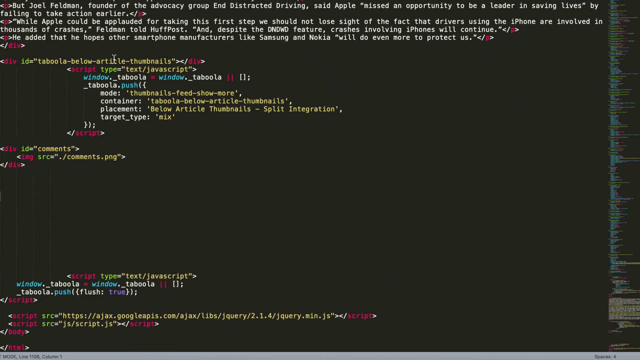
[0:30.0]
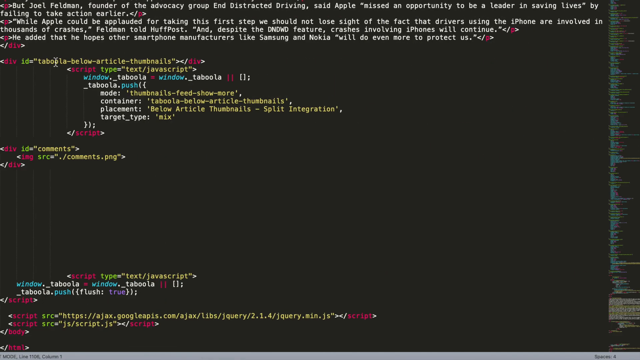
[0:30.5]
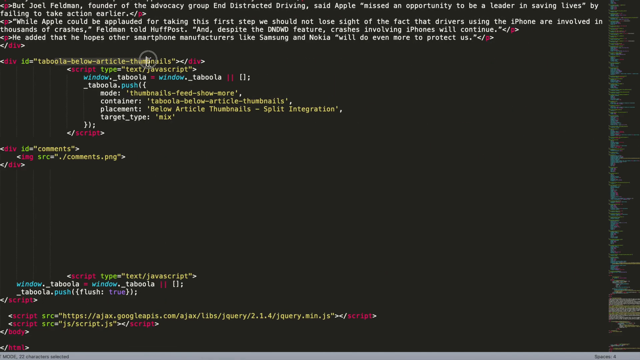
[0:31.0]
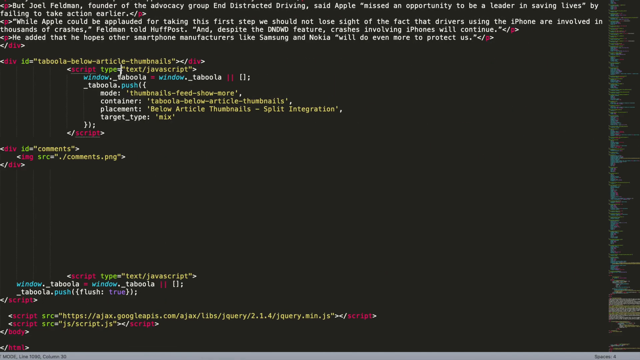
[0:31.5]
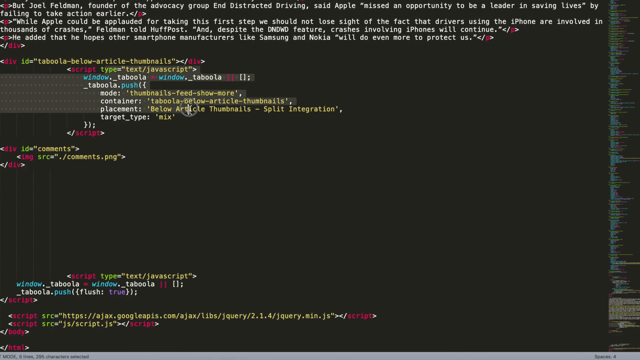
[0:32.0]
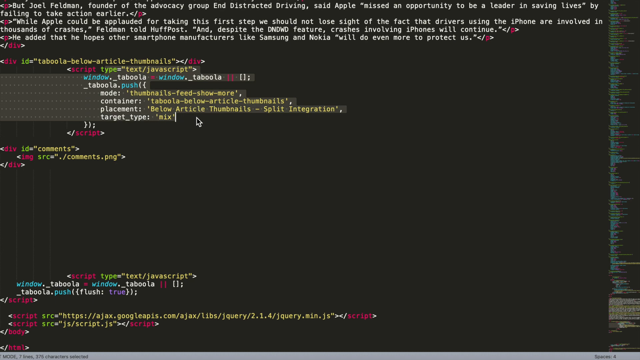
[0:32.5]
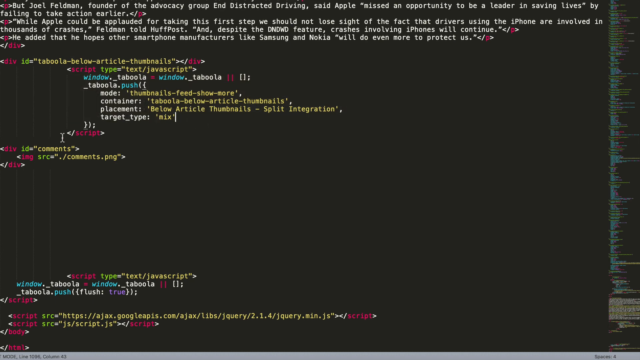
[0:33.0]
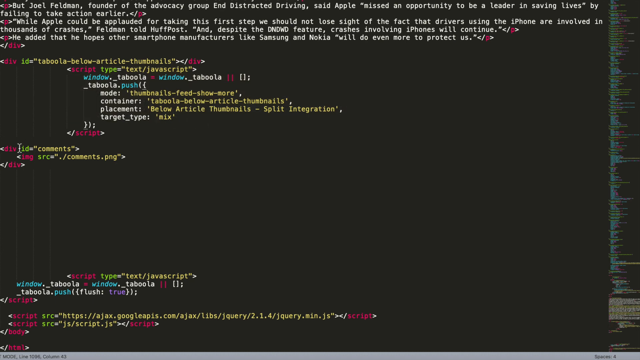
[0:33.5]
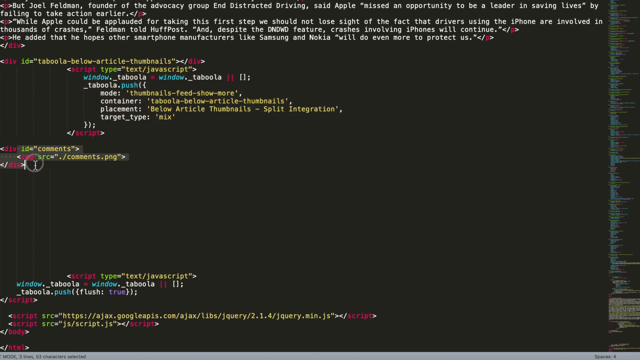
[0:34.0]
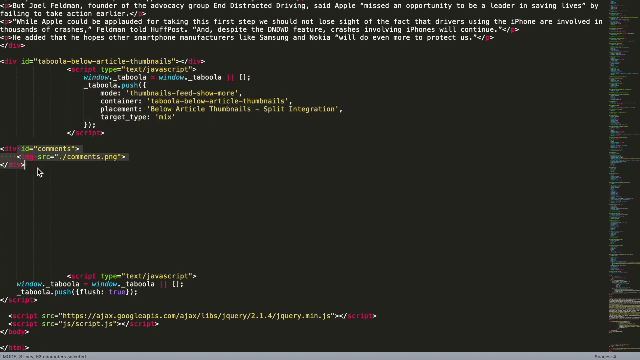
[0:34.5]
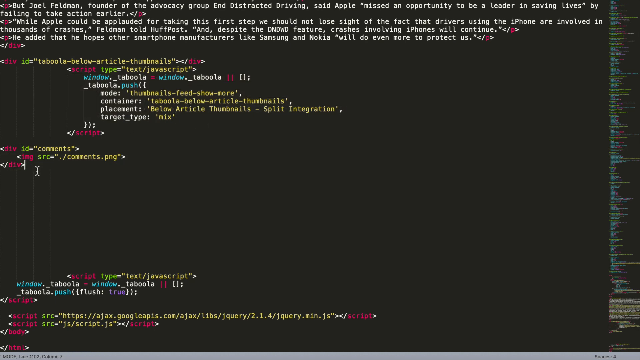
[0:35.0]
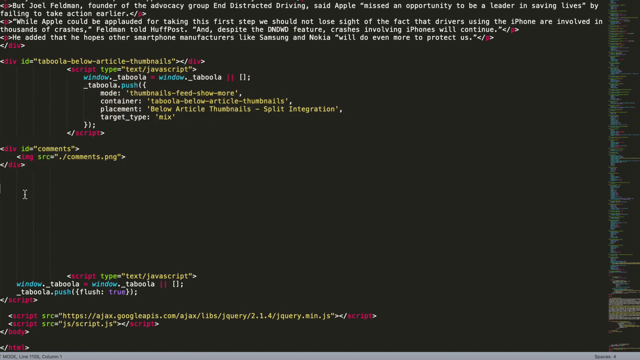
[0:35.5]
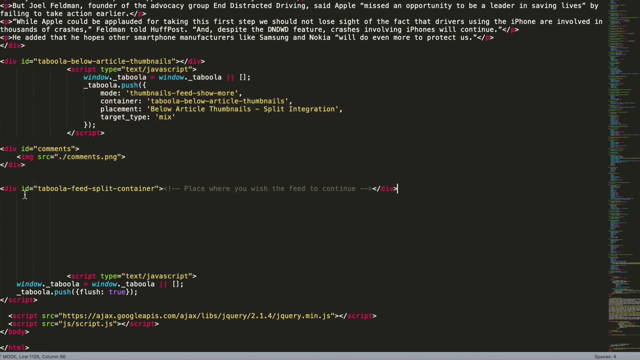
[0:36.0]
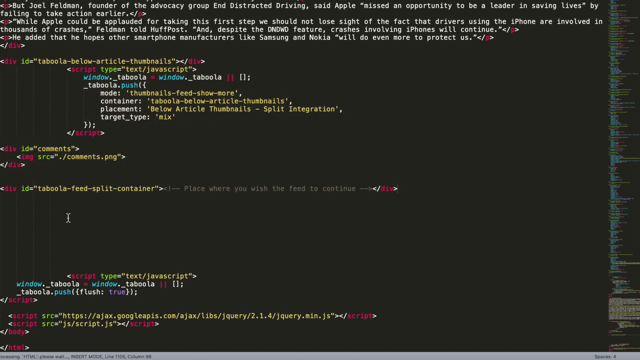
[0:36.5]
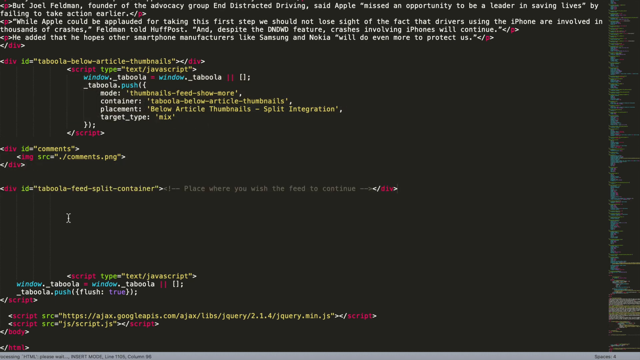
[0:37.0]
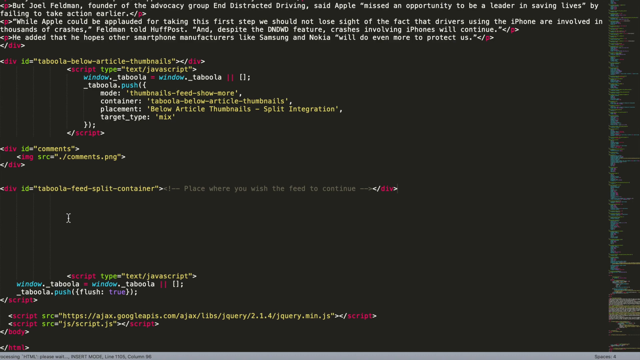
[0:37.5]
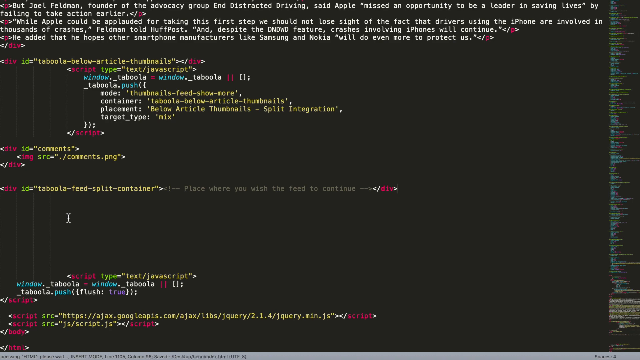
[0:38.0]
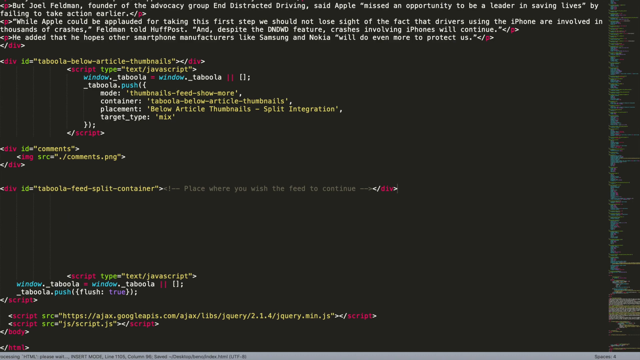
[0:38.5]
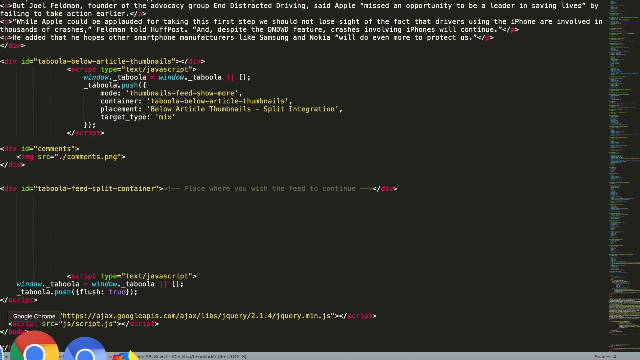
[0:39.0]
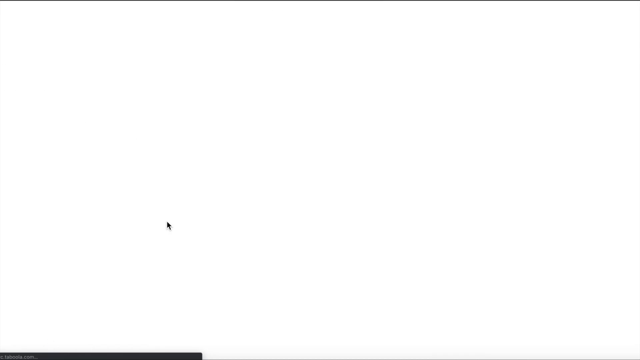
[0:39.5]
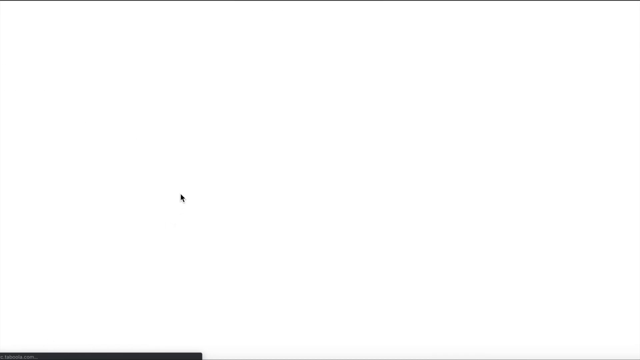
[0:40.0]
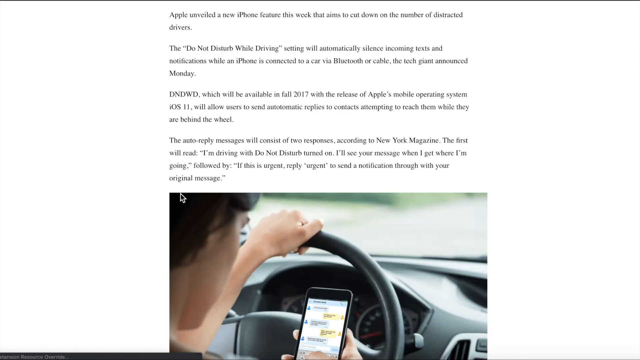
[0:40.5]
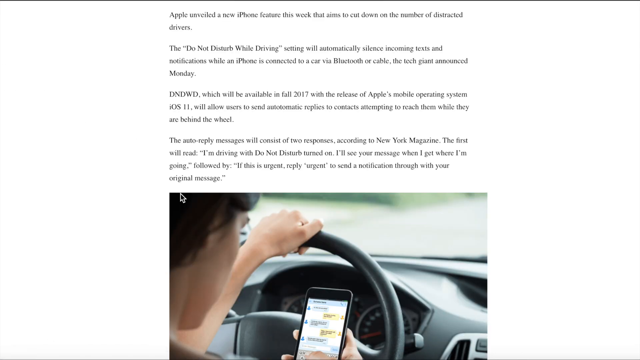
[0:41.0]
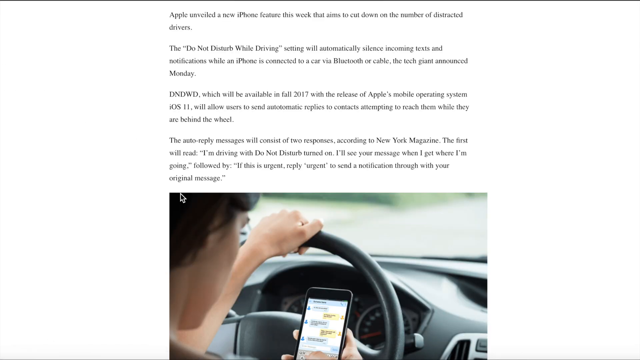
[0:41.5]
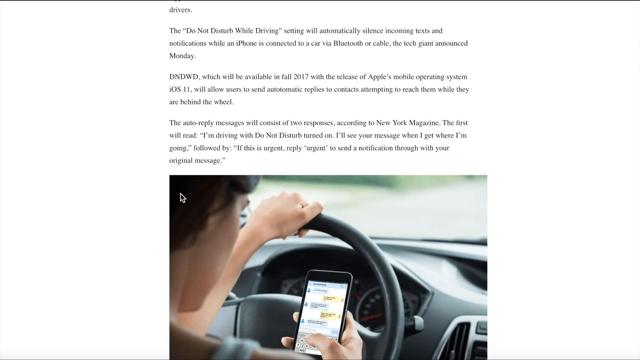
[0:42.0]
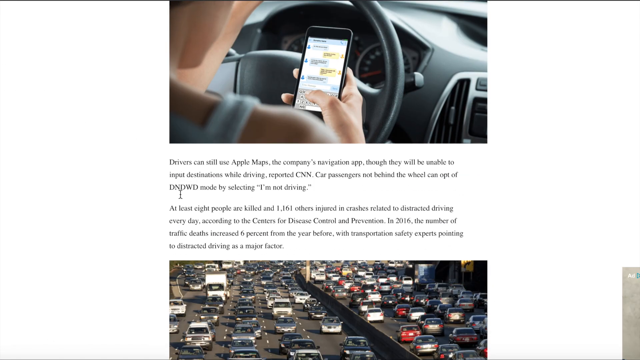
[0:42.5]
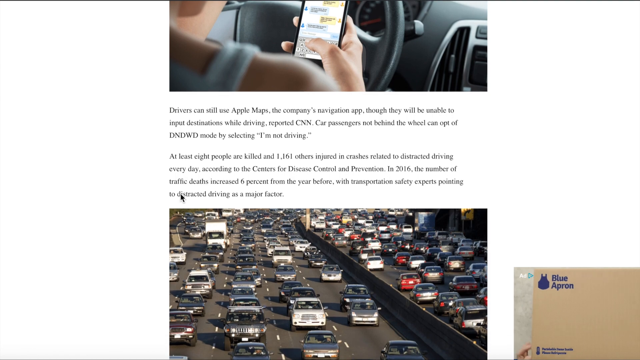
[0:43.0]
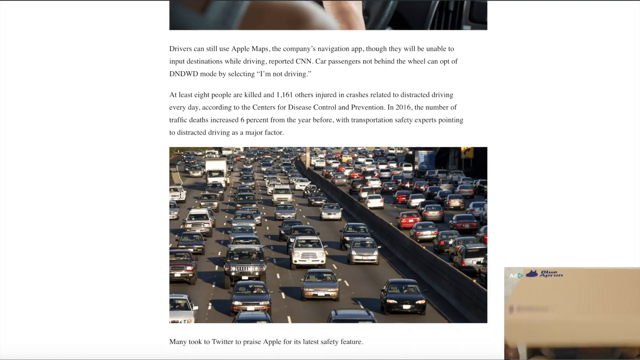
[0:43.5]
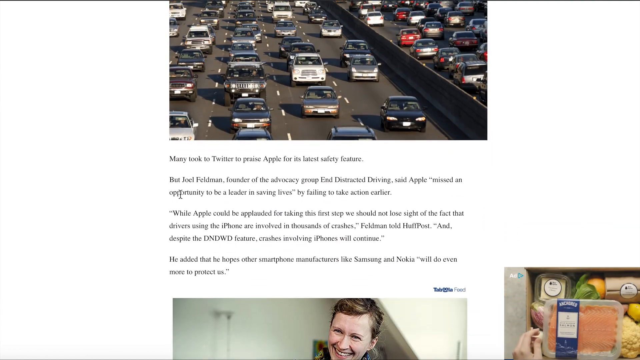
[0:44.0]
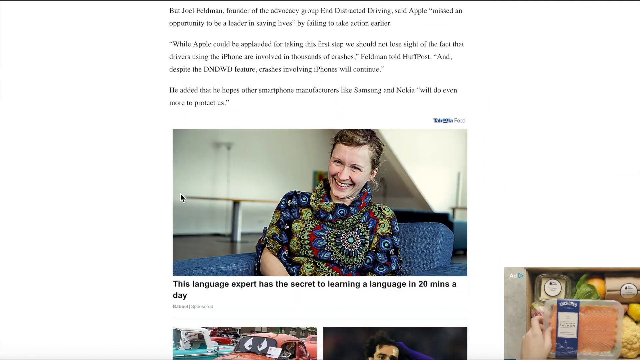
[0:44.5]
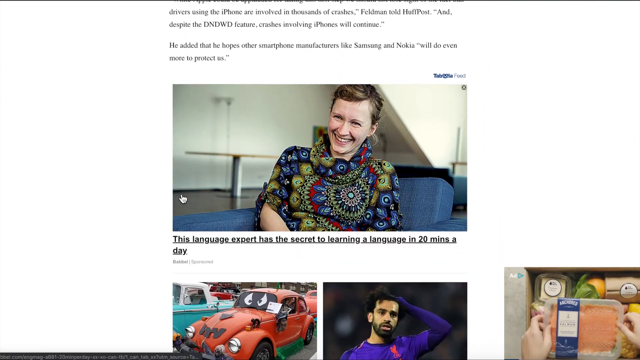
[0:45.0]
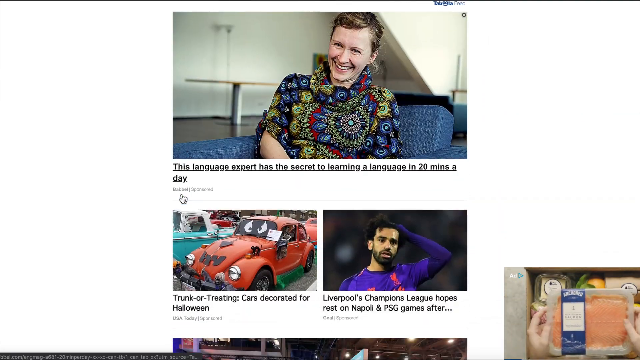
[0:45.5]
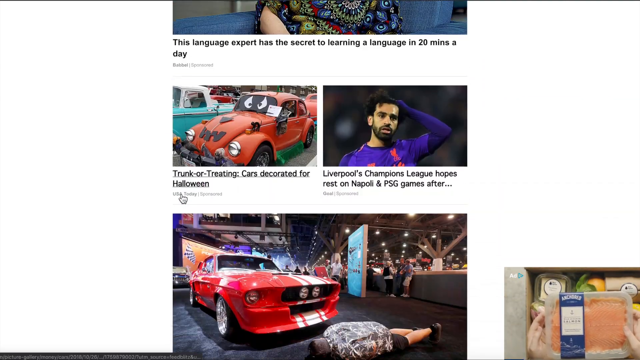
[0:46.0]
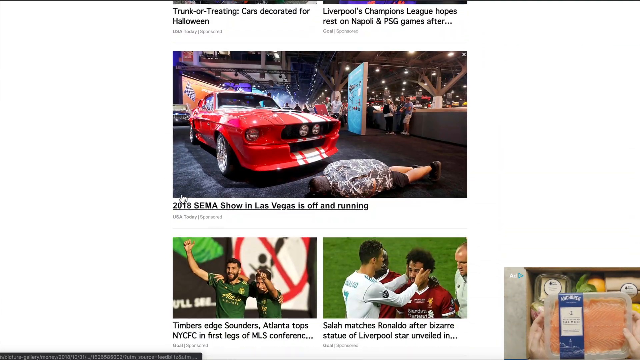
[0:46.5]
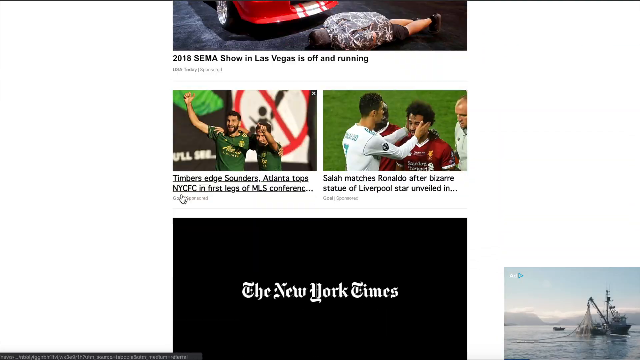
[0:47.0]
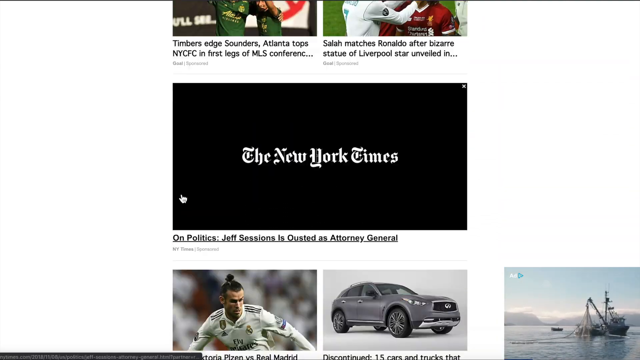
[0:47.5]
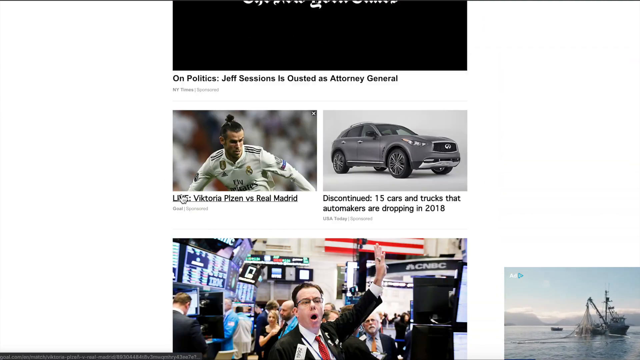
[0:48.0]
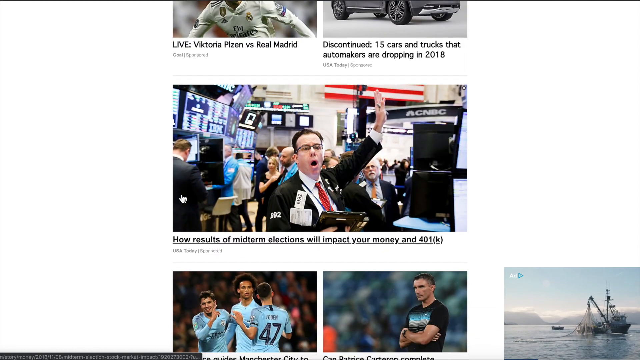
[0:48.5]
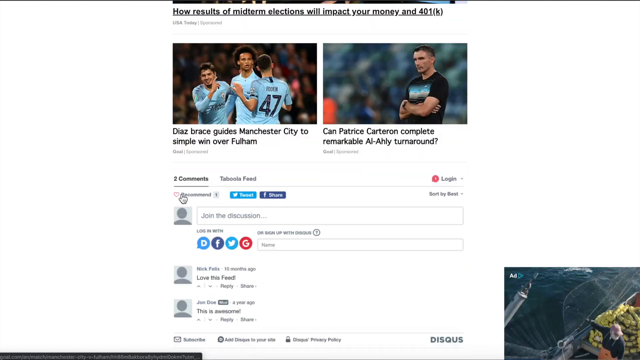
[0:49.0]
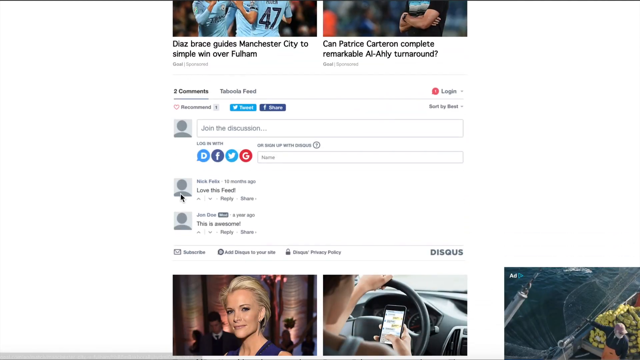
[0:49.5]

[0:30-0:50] Someone quickly looks at the source code of the website. The end of the article appears at the top, with the text and formatting about the Apple do not disturb while driving feature, and below it is a JavaScript insert for other article thumbnails. The view then leaves the source code and returns to the article page. The person recording scrolls, starting back at the top of the article, goes through the whole Apple do not disturb piece, and then scrolls down to the other articles, which cover topics such as learning a language, car shows and Liverpool. There is also a comment section at the very bottom.